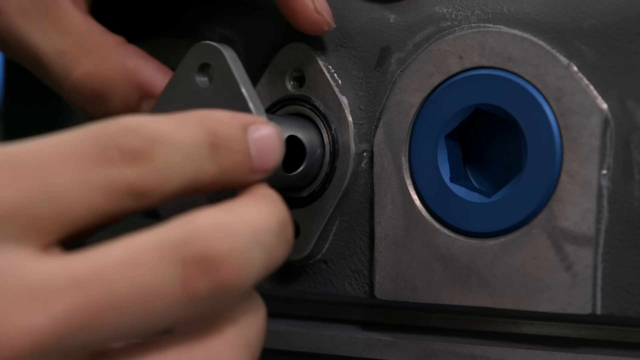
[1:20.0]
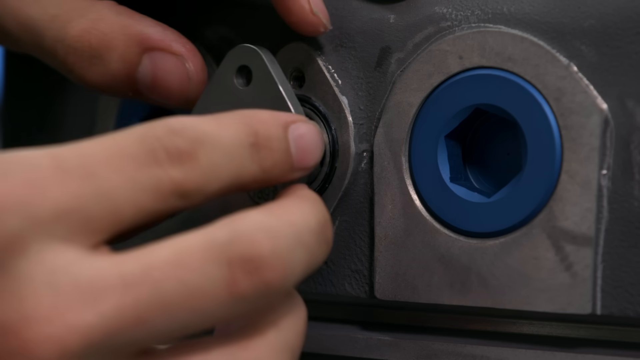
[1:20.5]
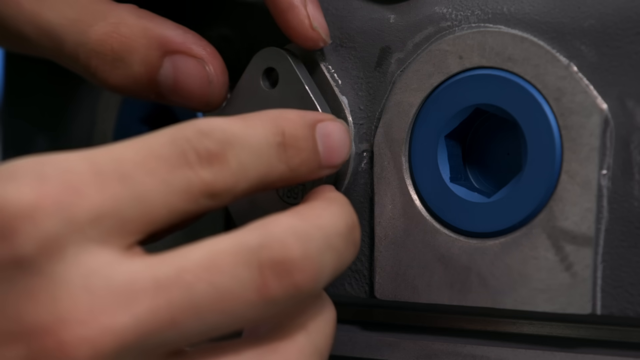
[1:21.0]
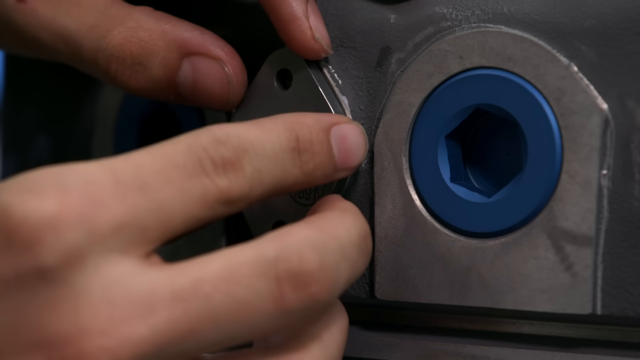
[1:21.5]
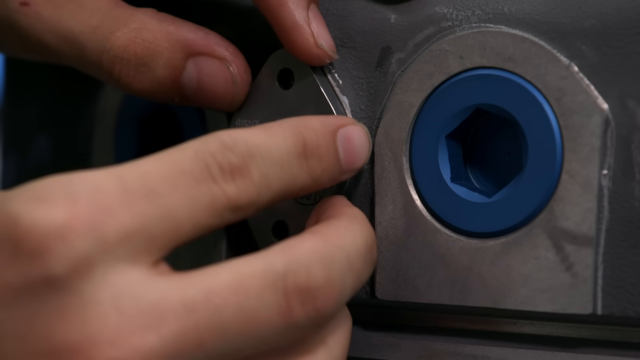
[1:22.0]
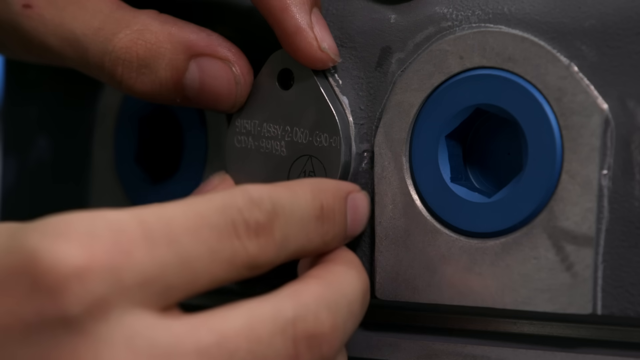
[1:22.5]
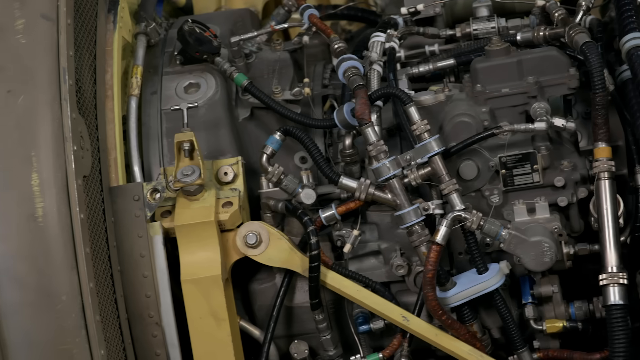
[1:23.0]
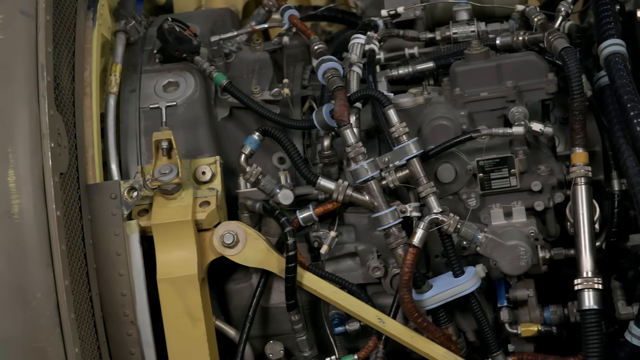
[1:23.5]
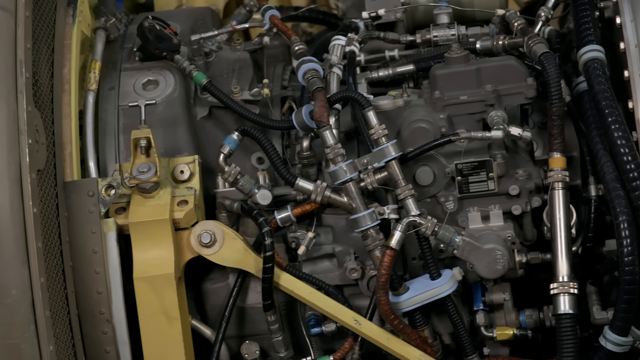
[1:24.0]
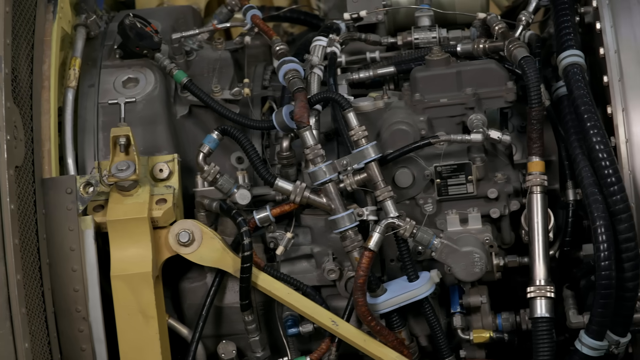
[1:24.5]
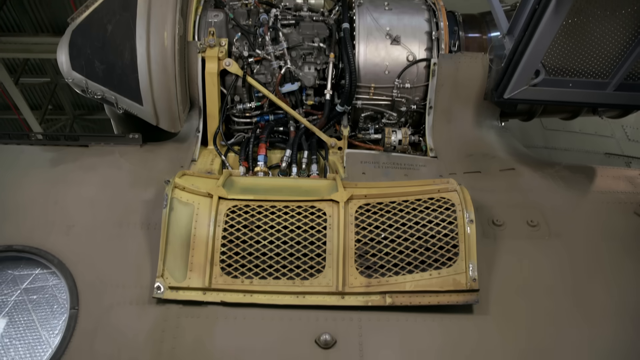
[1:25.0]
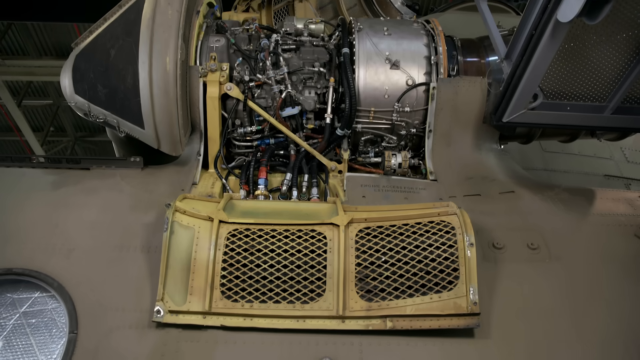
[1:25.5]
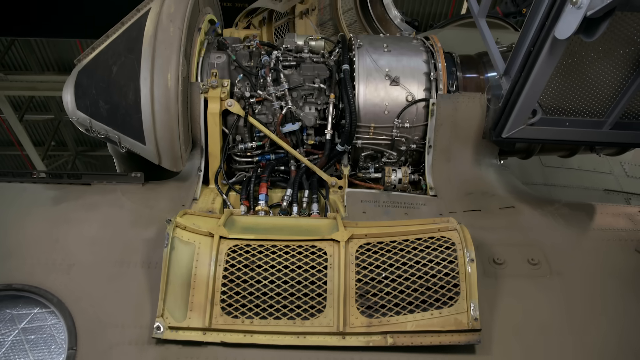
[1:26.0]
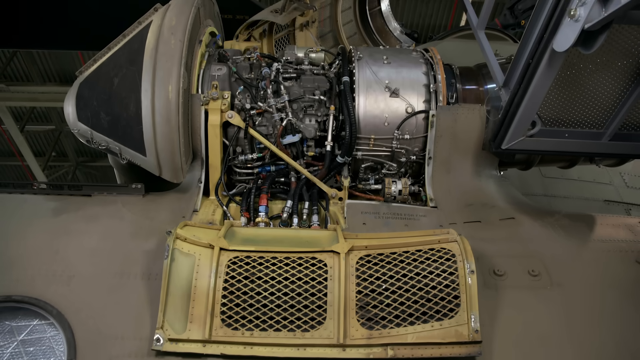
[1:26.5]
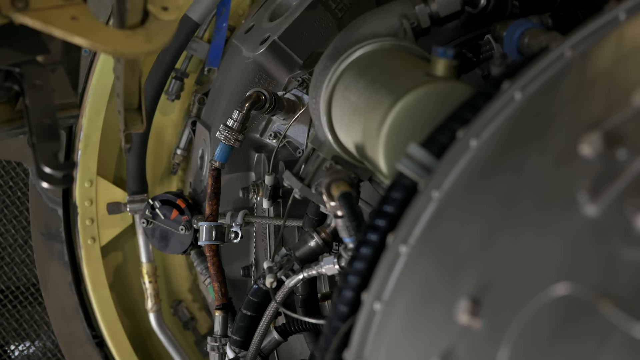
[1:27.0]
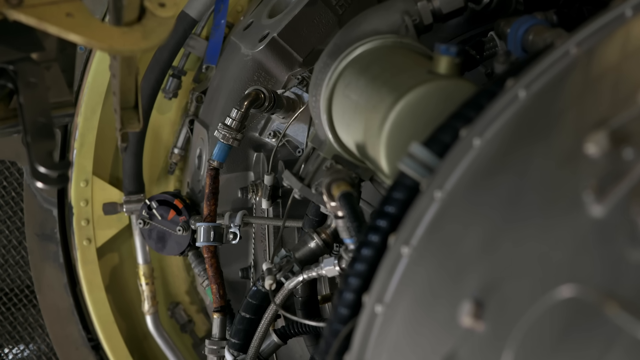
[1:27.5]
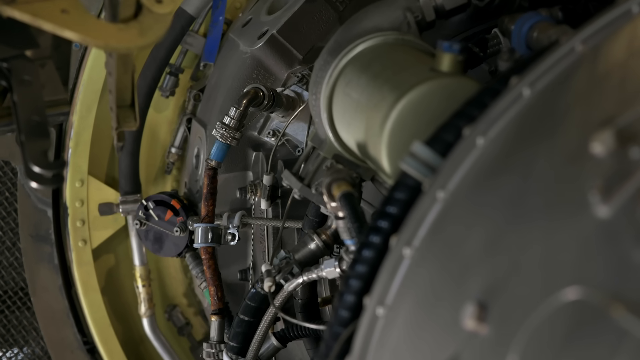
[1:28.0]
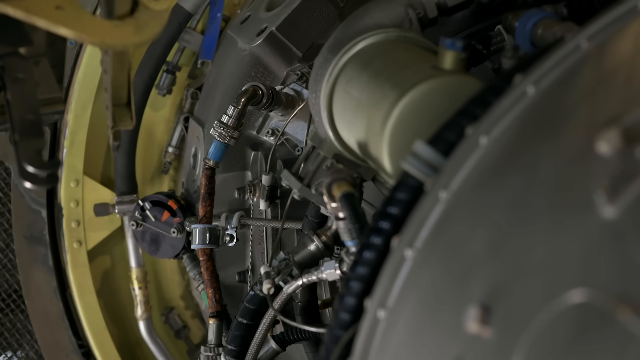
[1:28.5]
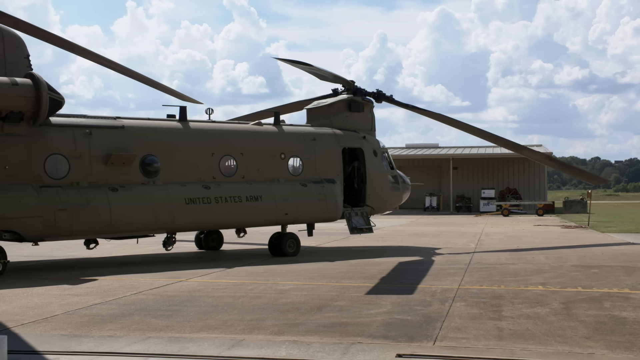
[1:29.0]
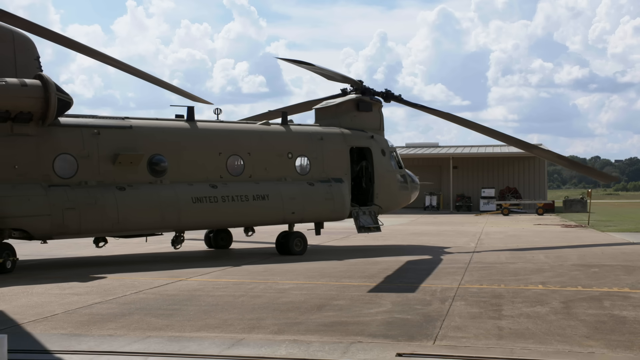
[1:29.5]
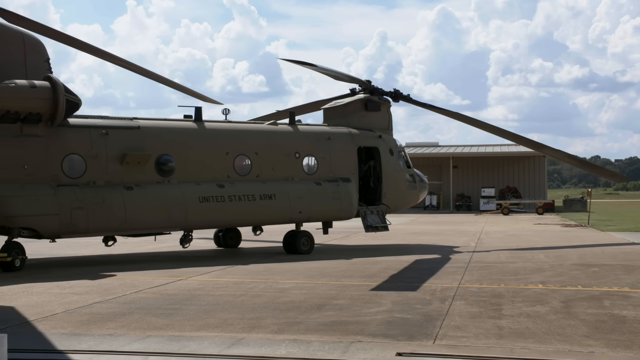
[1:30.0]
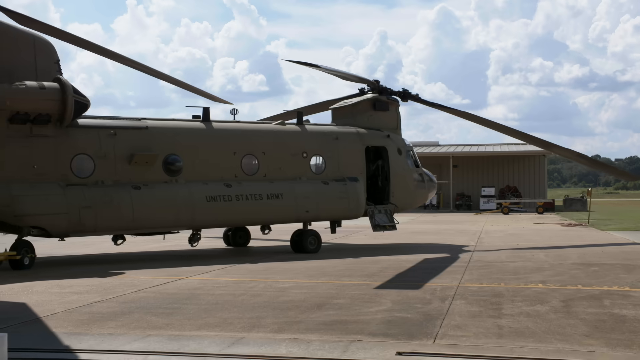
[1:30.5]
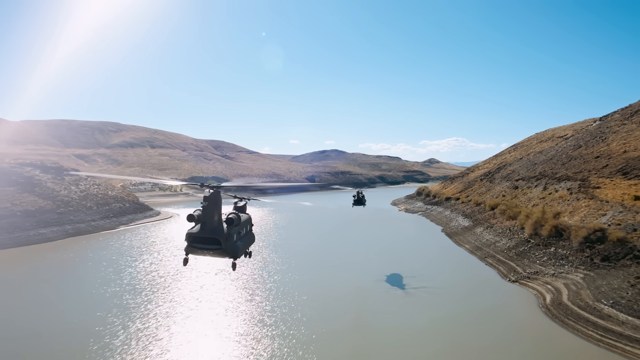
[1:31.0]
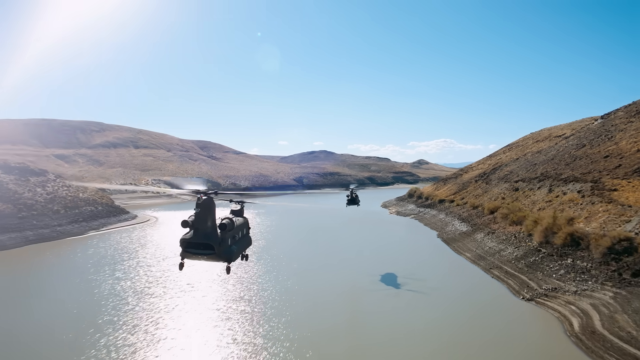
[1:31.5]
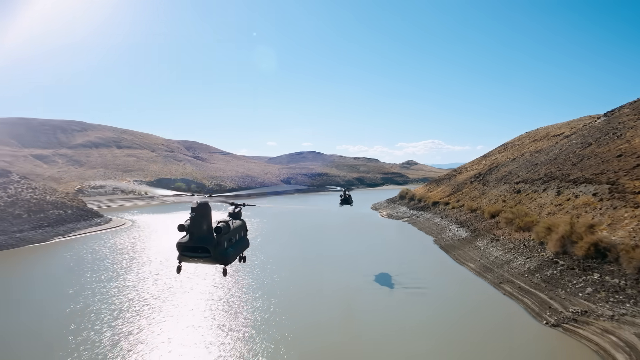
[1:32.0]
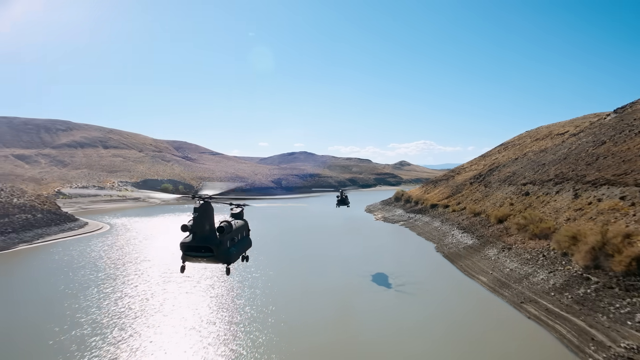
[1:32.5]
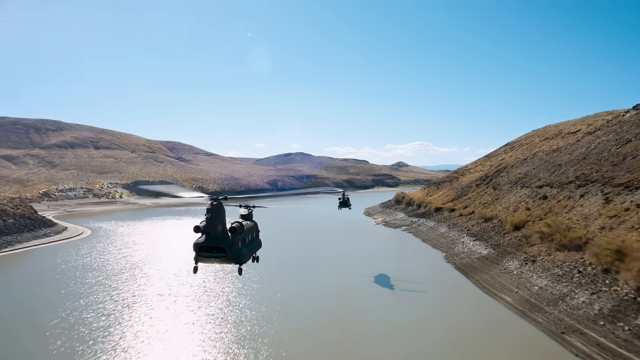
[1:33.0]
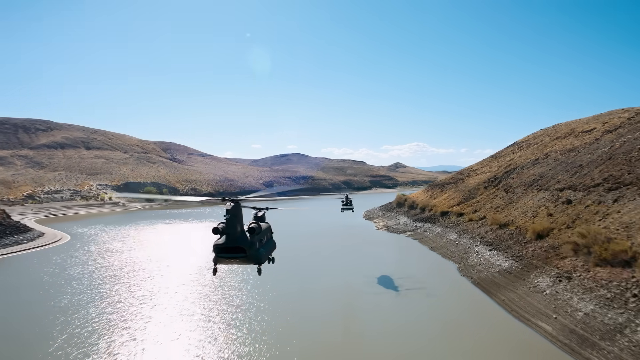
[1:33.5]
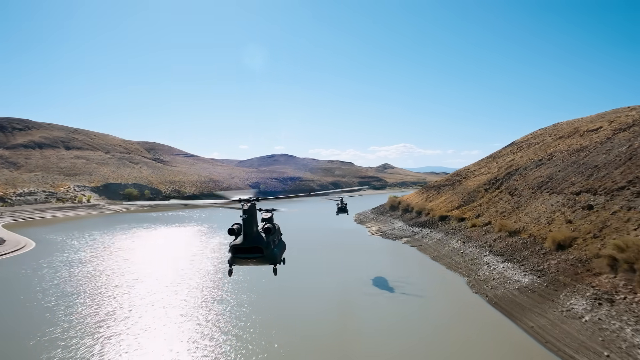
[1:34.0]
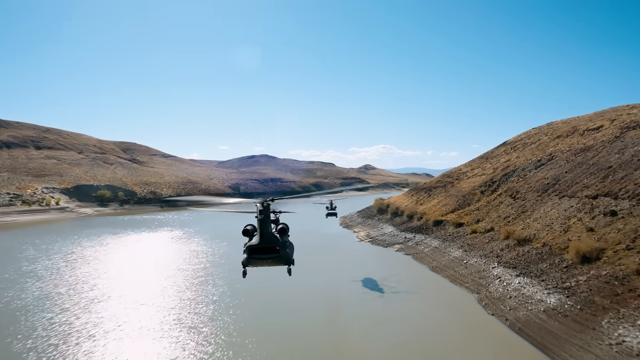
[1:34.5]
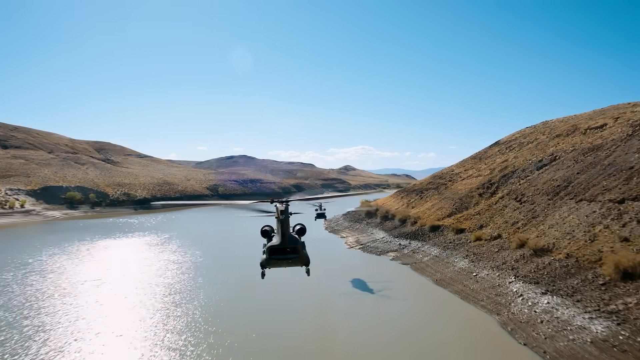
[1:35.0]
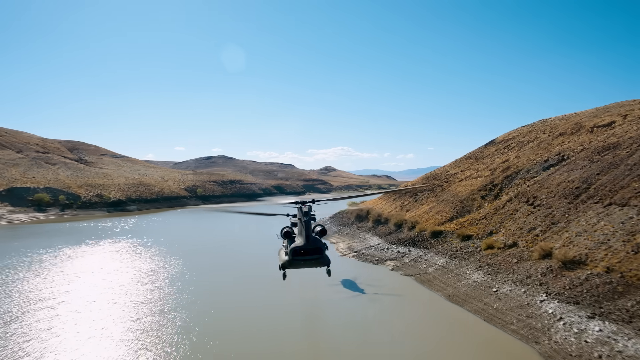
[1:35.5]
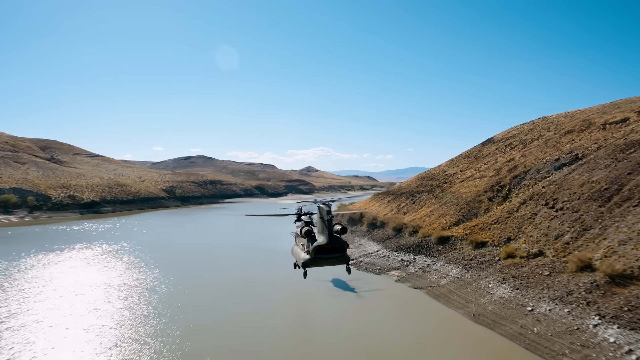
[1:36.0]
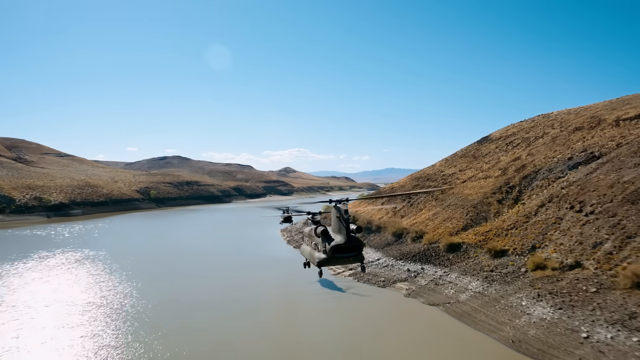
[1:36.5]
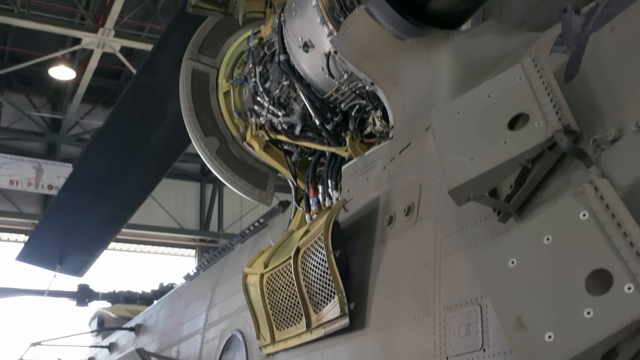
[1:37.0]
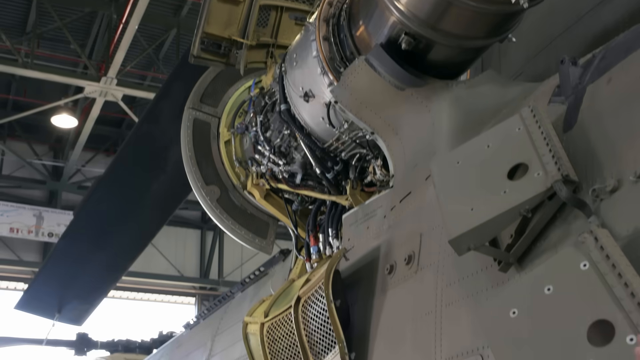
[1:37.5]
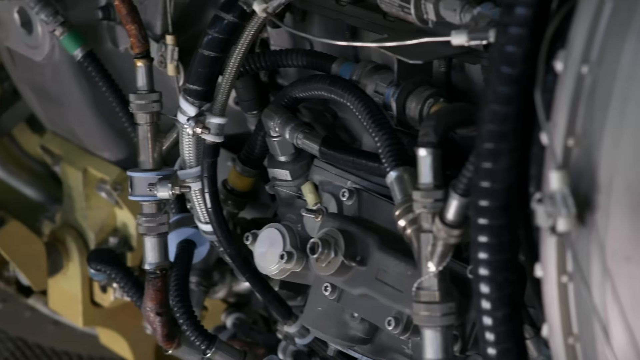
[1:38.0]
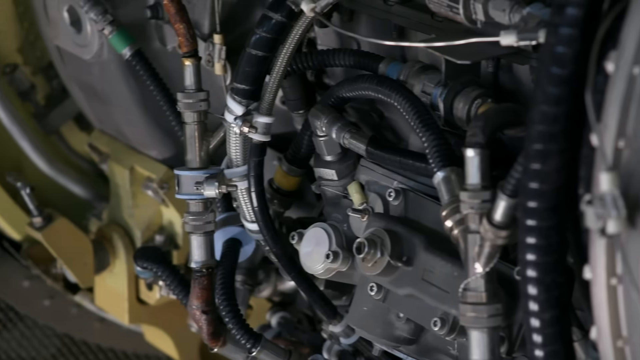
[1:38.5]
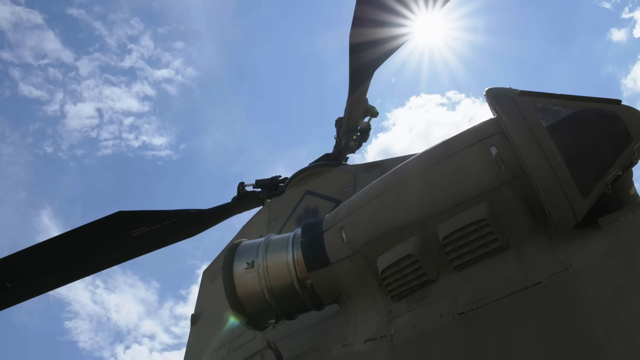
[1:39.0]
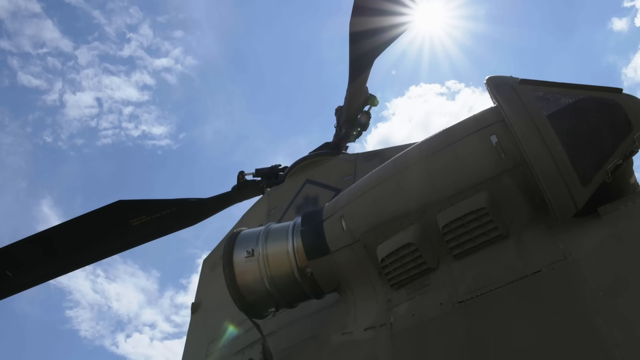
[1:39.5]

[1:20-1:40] Parts of an engine belonging to an Army aircraft, a helicopter with propellers on the front and the back, are shown, with close-ups of cable connections. The aircraft flies very low along a bank of a river. Close-ups show how the propeller pieces fit into grooves. The engine is seen from an aerial view and up close. One aircraft gets ready to take off, driving very slowly on pavement on a very sunny day. The outside of the aircraft is shown. The engine parts are very intricate, with many connections, and most of the parts are very small.